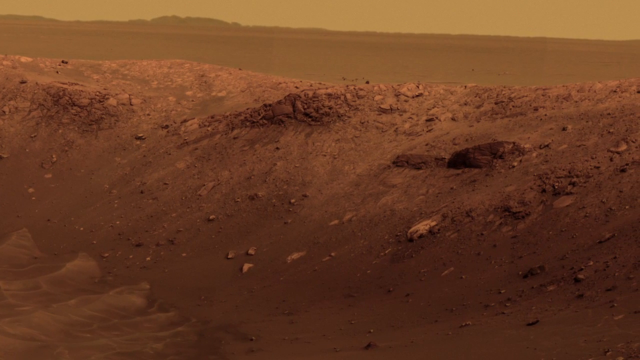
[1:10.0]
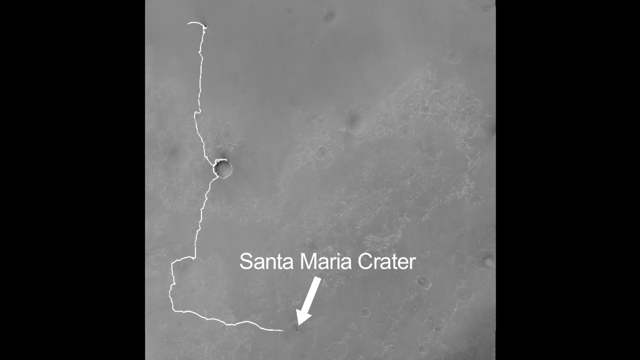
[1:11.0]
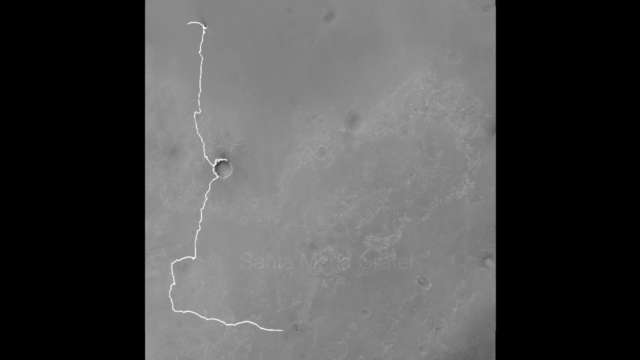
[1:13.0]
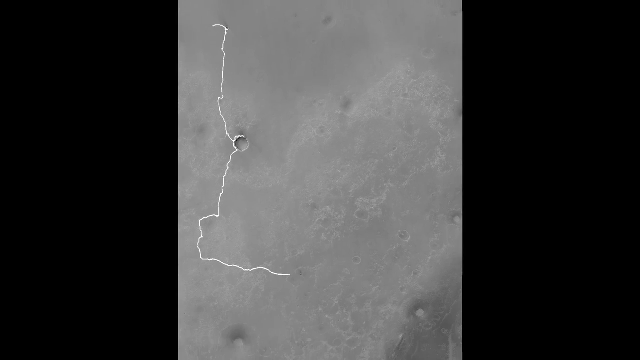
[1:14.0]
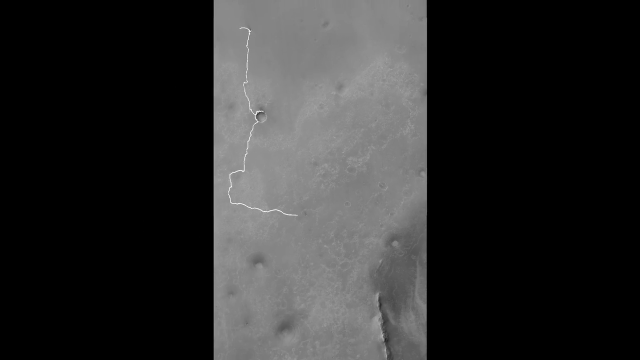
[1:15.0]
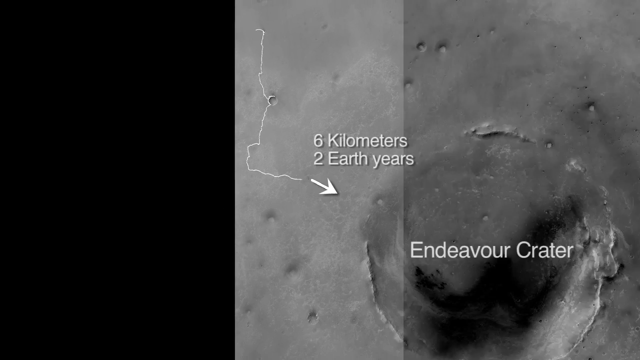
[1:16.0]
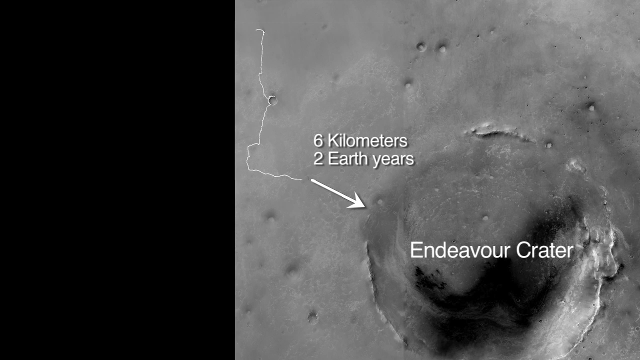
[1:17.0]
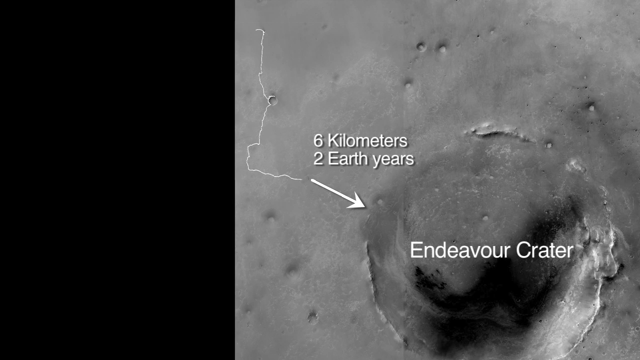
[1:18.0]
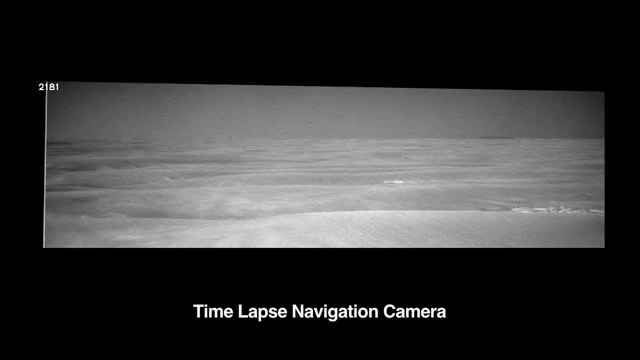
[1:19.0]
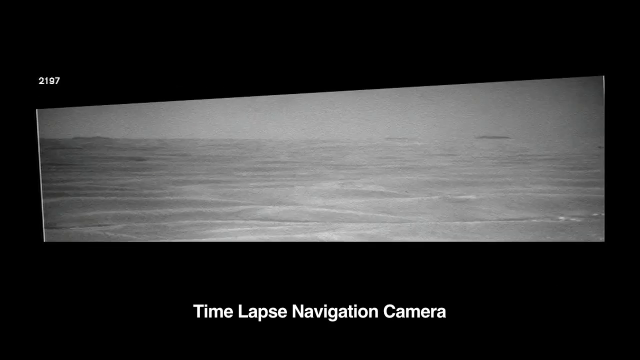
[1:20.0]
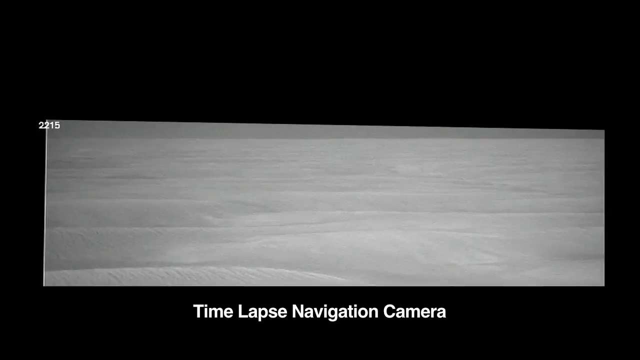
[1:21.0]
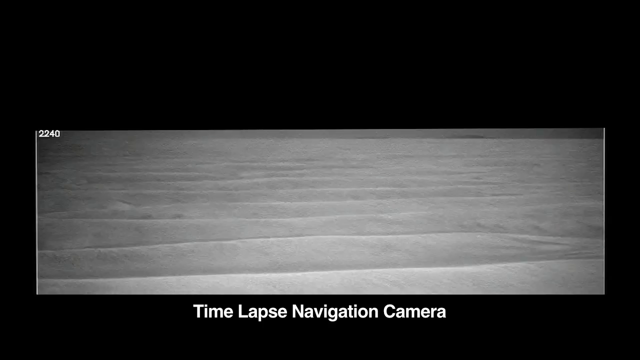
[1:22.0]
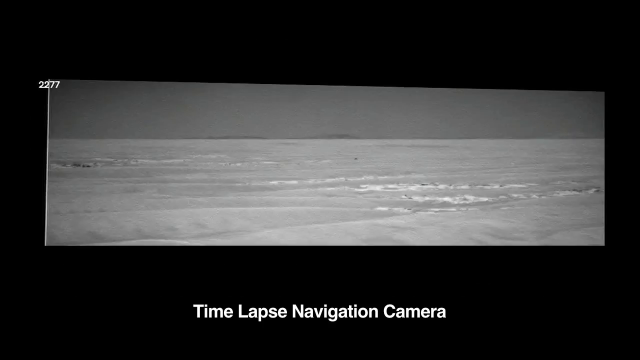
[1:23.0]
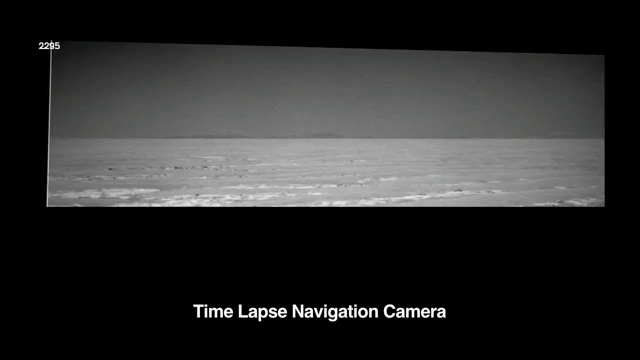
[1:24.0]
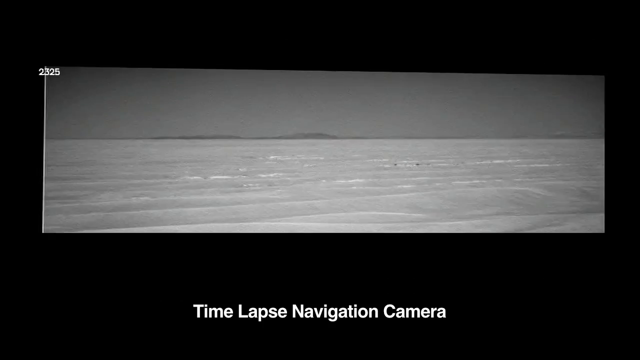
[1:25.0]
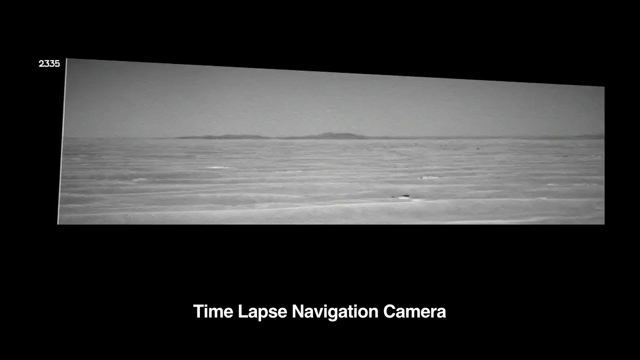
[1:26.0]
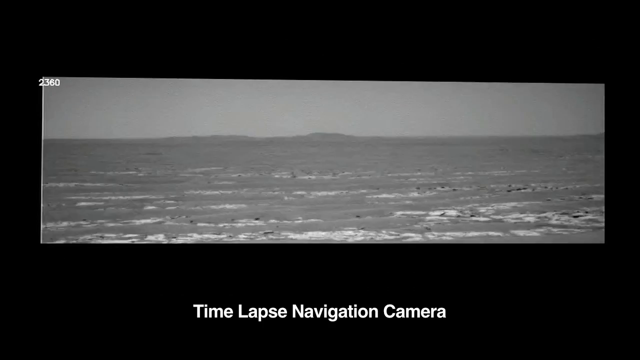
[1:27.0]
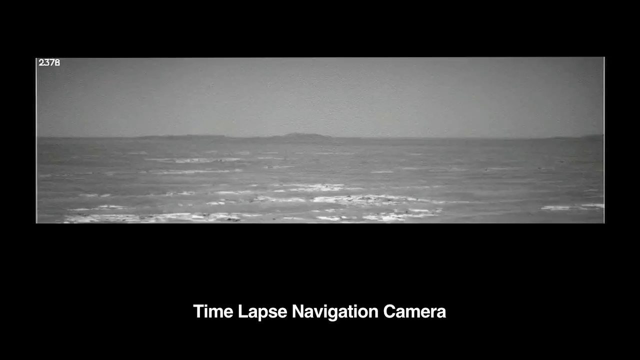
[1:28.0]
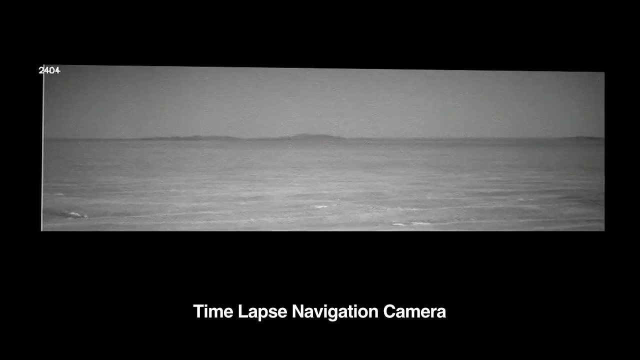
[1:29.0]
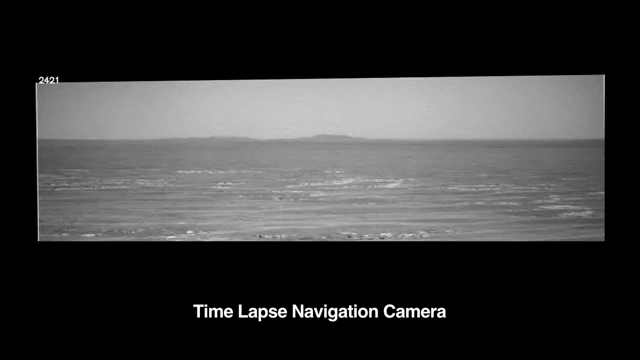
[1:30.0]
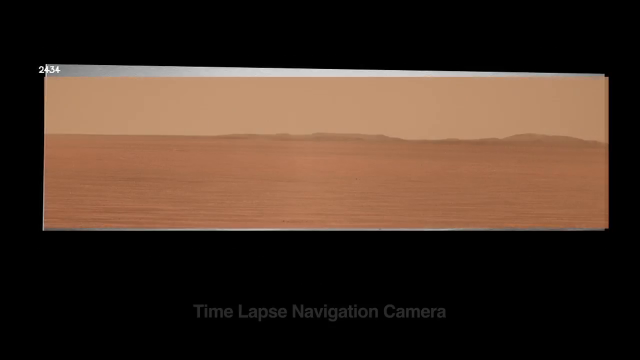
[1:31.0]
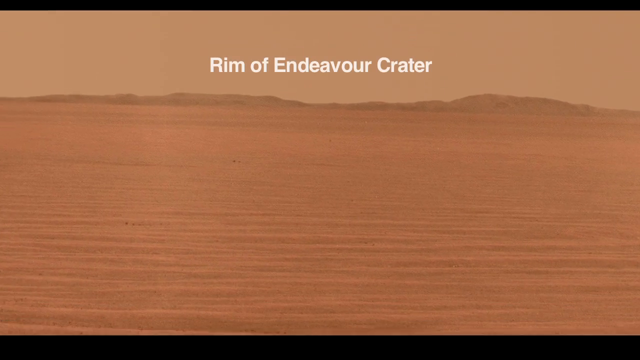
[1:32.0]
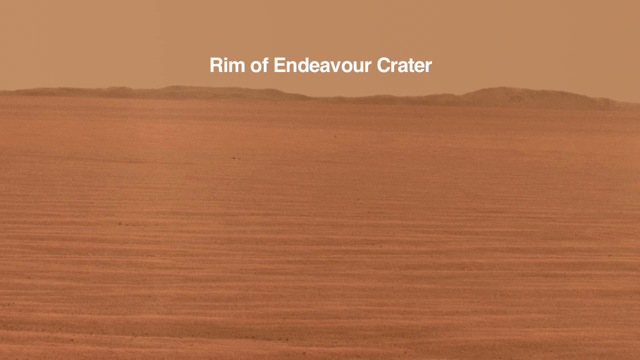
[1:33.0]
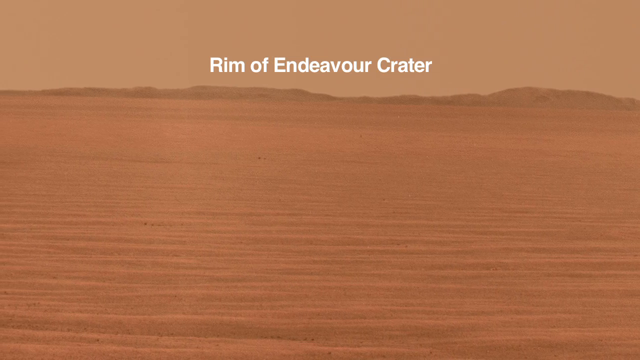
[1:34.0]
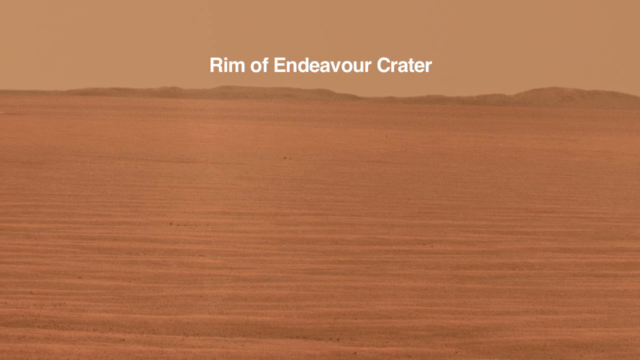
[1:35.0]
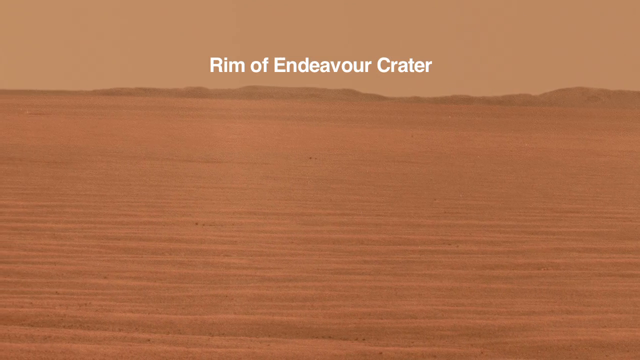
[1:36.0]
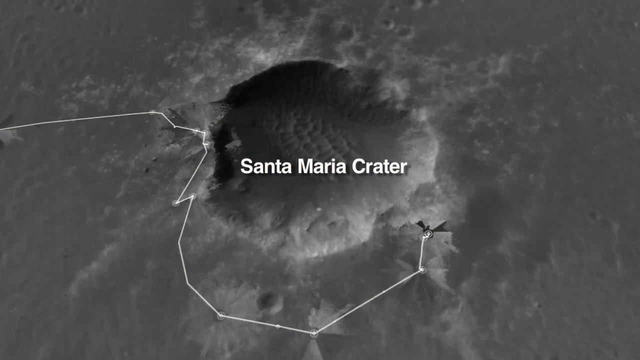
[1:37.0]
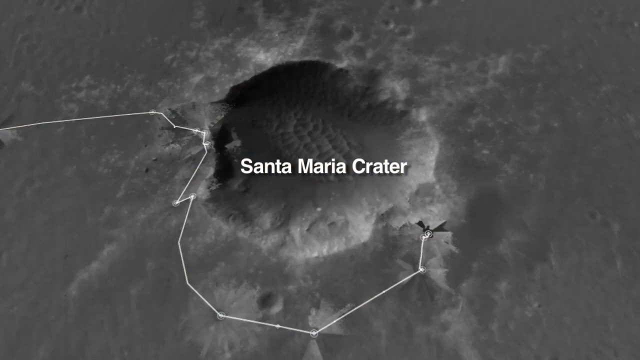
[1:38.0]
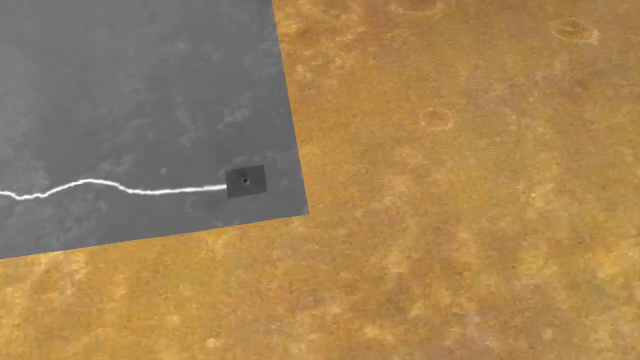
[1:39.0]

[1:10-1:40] Almost like a satellite photo of the planet is shown, all gray. At the bottom center it reads "Santa Maria Crater", with an arrow pointing down and slightly towards the left. On the left-hand side a white line goes vertically down, and a little circle on the center left-hand side looks to be the crater. The arrow and the crater's title disappear, and the view zooms way out. The same vertical line is on the far left-hand side, and in the center it reads "six kilometers", with the arrow now pointing slightly down and towards the right at a much bigger crater labeled "Endeavor Crater". This stays on screen for a few seconds. It then transitions to a rectangular photo that very quickly moves up and down on each side, almost like a seesaw, and also shakes up and down. The upper left-hand corner says "2240", and beneath the rectangle it says "time-lapse navigation camera". Almost different photographs seem to be taken while the rectangle moves very quickly up, down, slightly to the right and slightly to the left. The view then zooms in on what looks almost like desert, with white text at the top center reading "Rim of Endeavor Crater", and the camera slowly moves towards the left, showing more of this area.